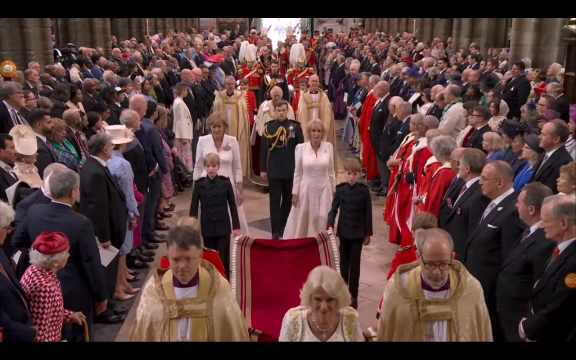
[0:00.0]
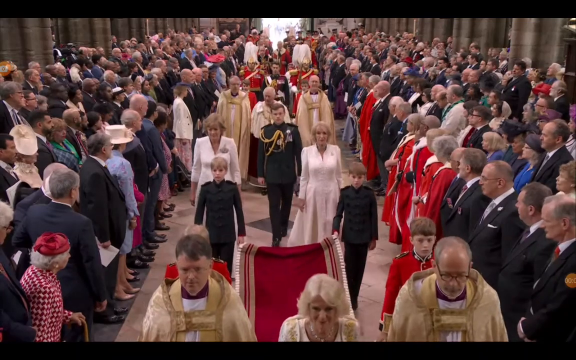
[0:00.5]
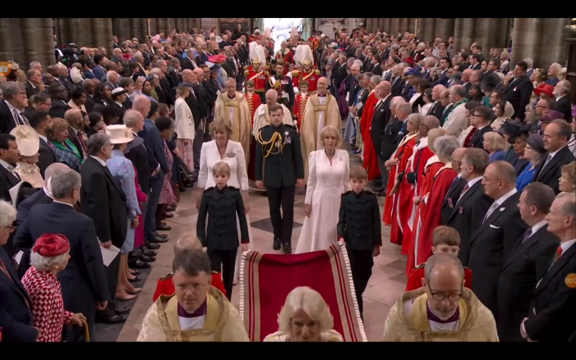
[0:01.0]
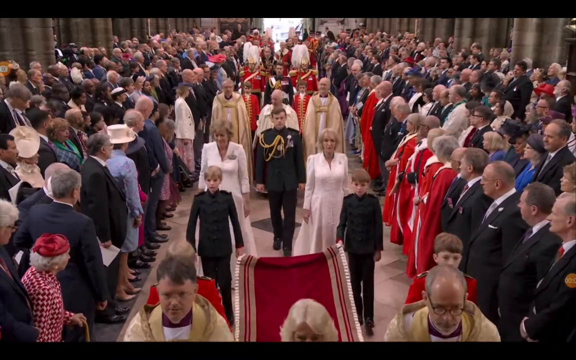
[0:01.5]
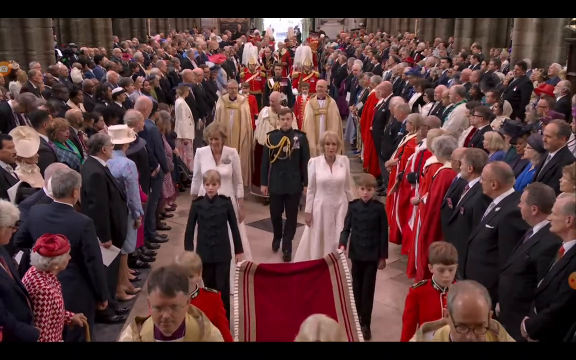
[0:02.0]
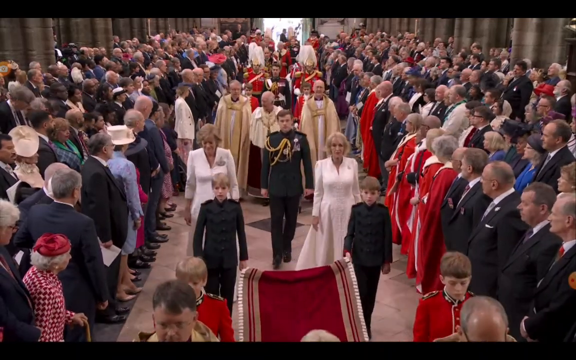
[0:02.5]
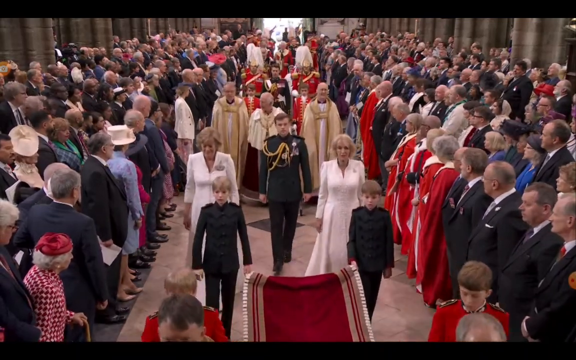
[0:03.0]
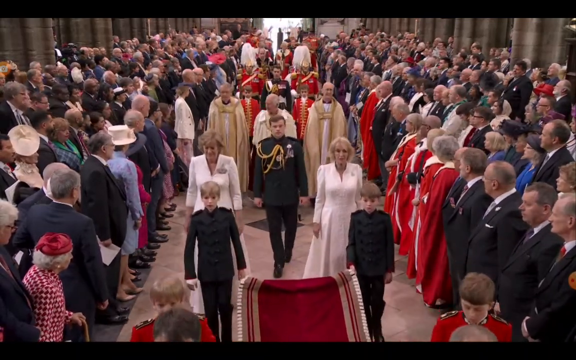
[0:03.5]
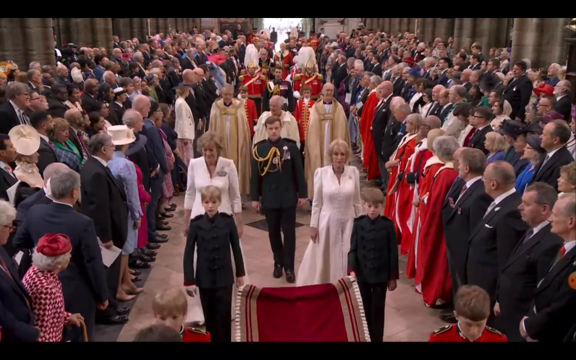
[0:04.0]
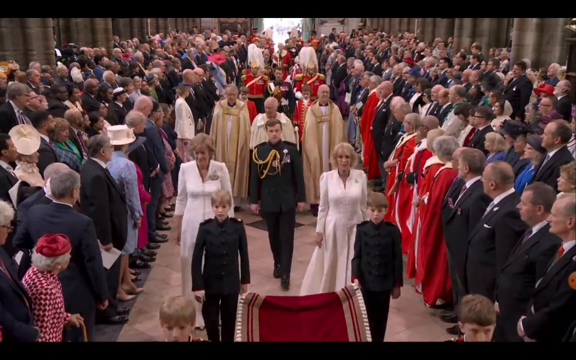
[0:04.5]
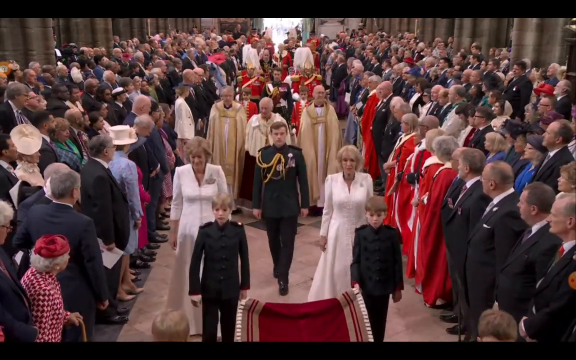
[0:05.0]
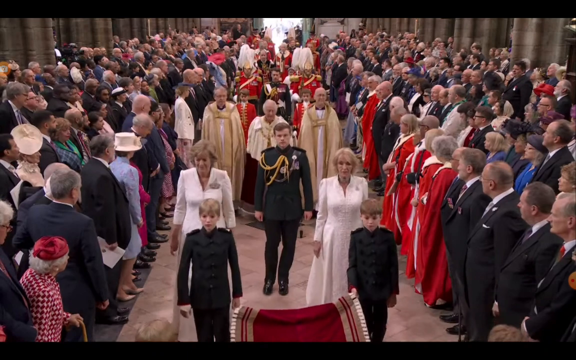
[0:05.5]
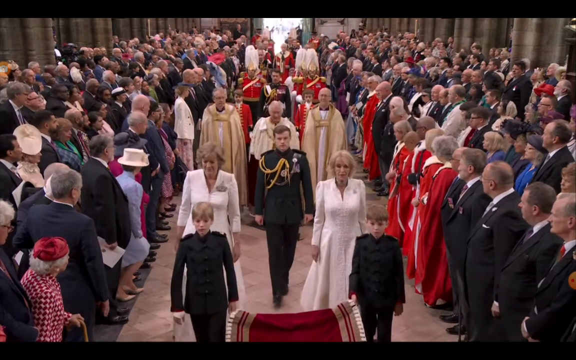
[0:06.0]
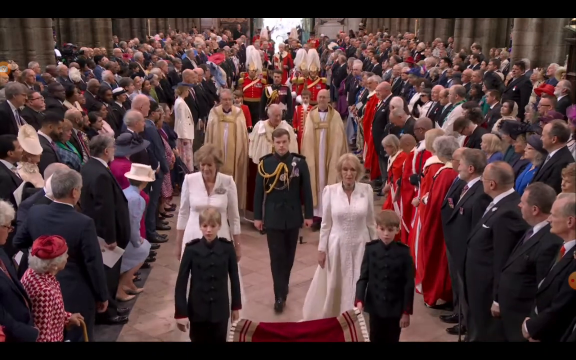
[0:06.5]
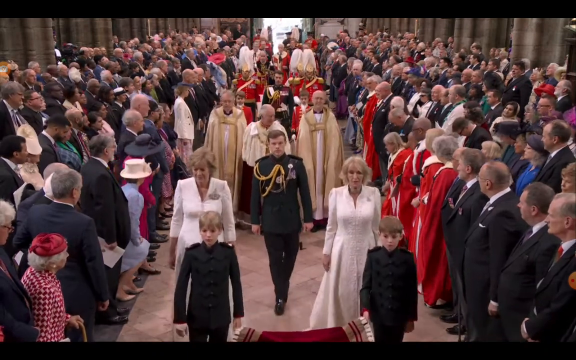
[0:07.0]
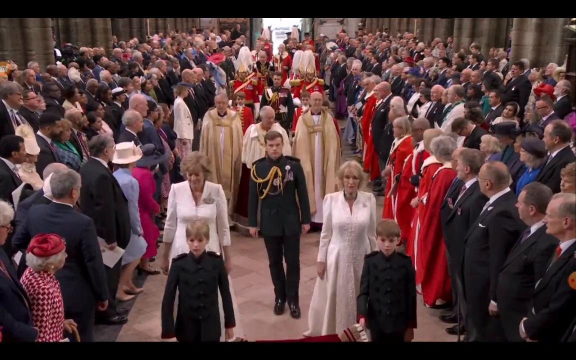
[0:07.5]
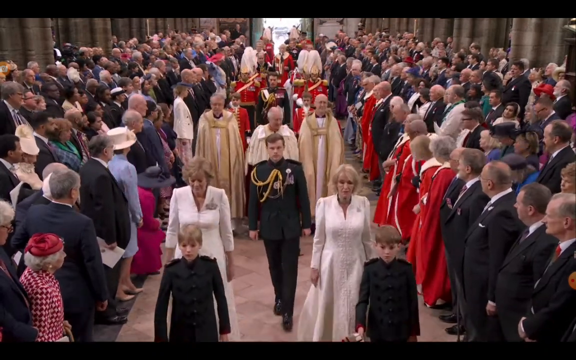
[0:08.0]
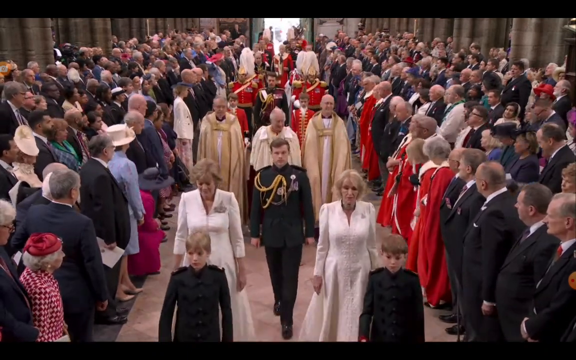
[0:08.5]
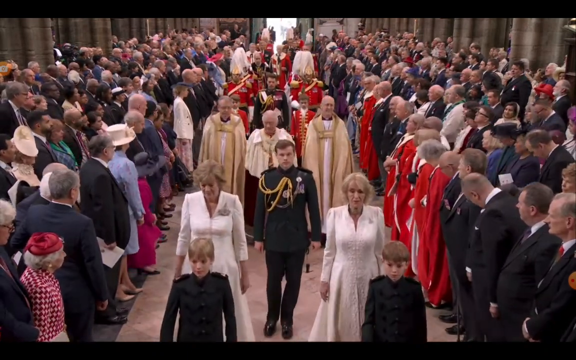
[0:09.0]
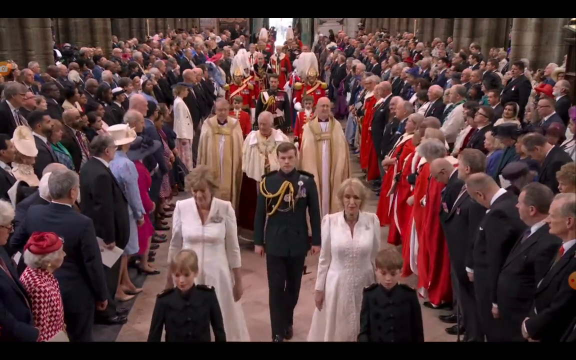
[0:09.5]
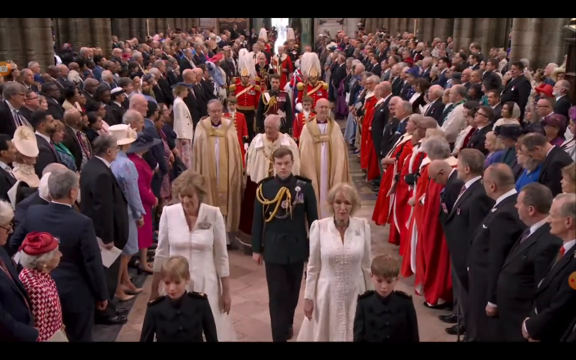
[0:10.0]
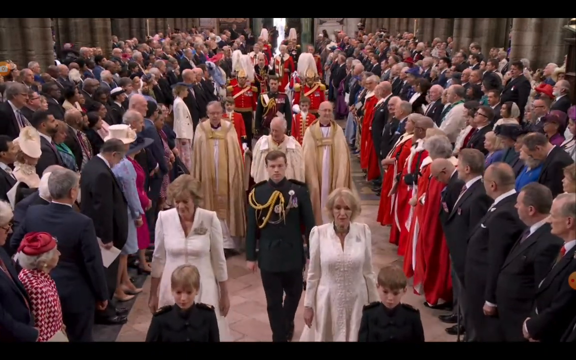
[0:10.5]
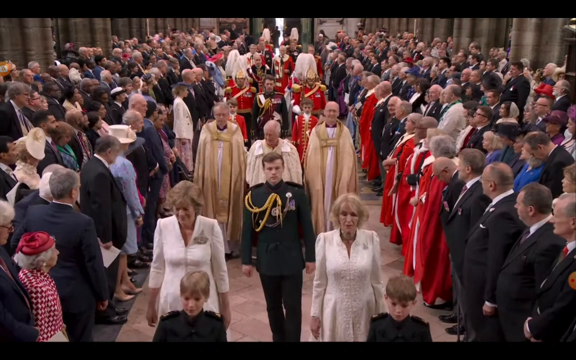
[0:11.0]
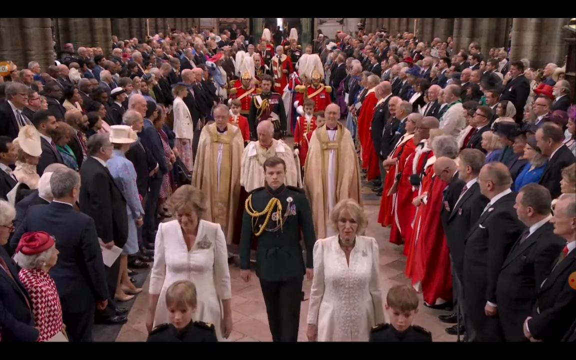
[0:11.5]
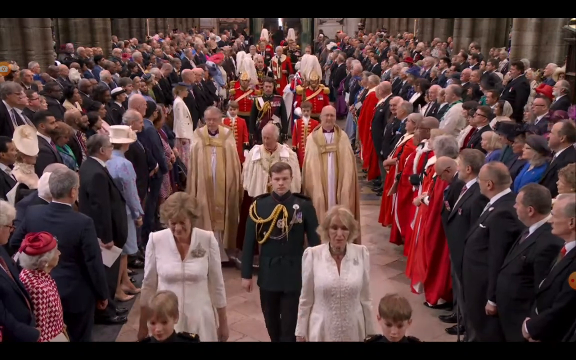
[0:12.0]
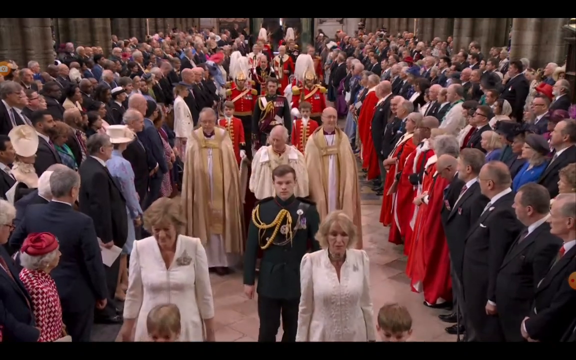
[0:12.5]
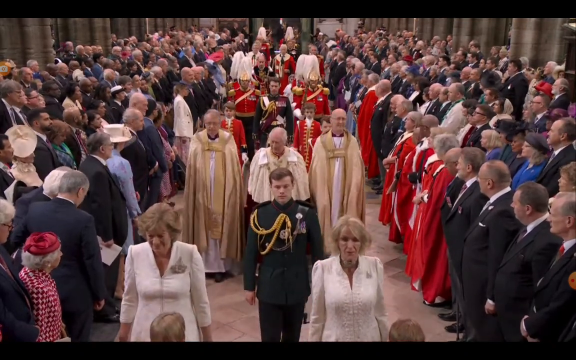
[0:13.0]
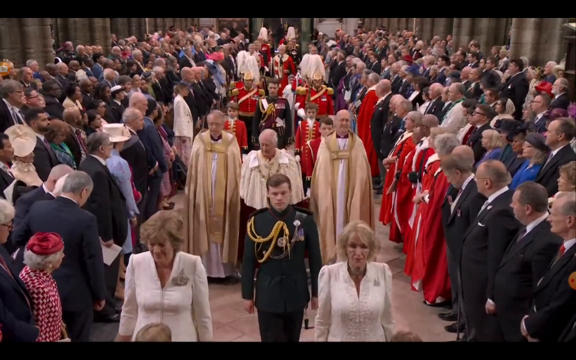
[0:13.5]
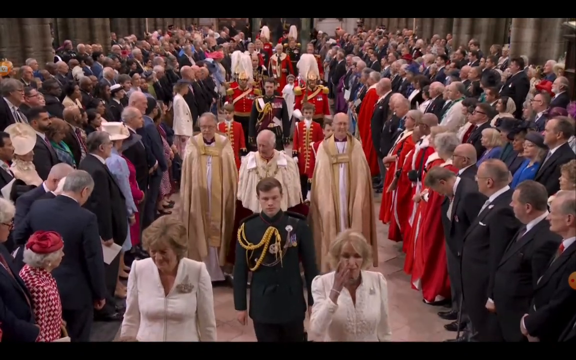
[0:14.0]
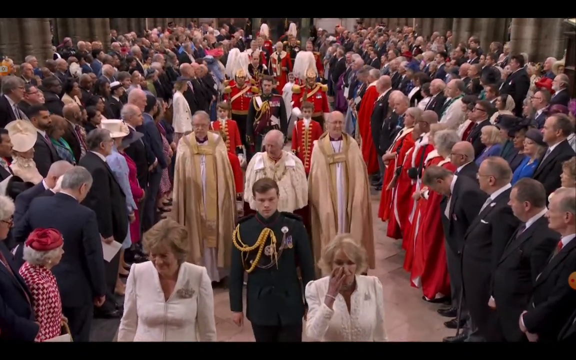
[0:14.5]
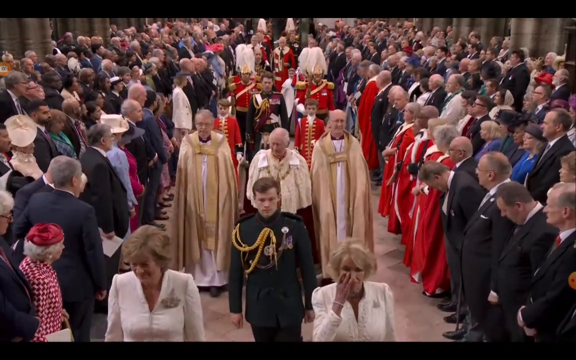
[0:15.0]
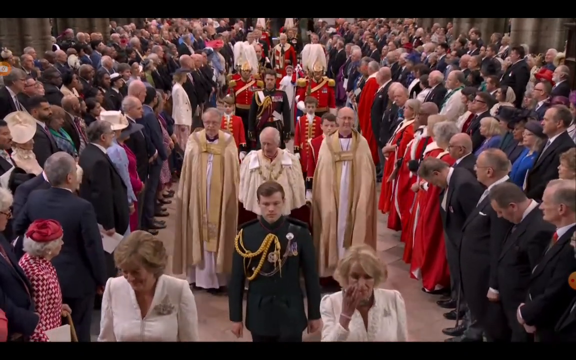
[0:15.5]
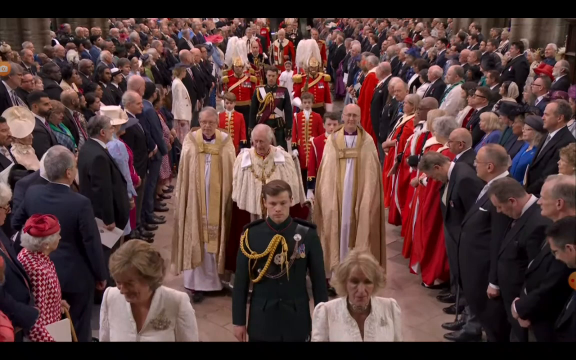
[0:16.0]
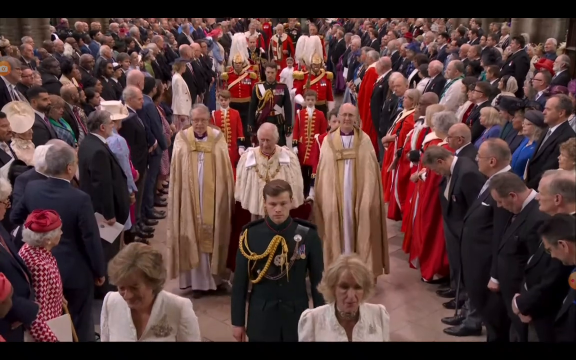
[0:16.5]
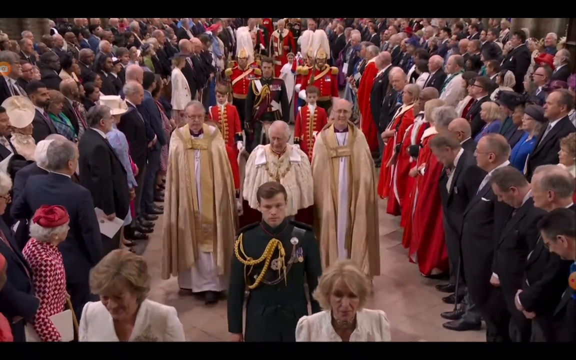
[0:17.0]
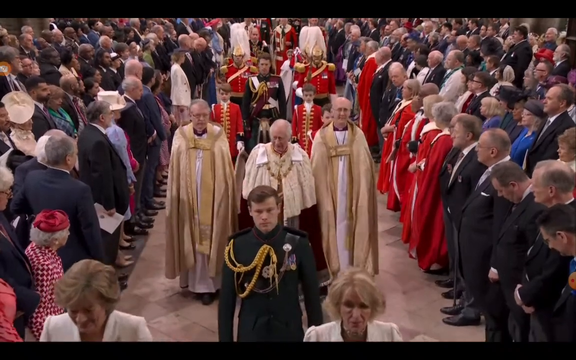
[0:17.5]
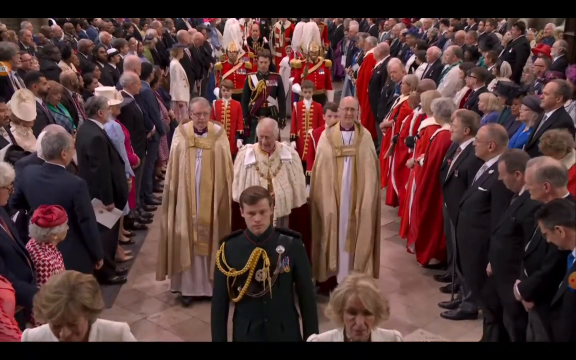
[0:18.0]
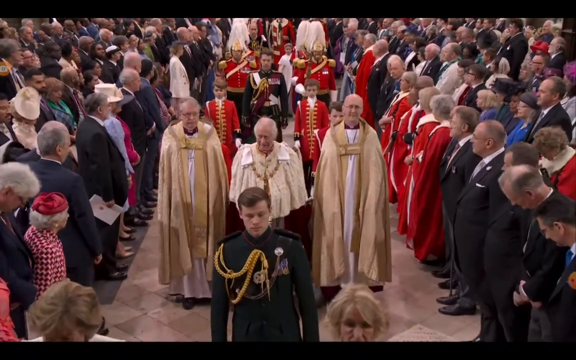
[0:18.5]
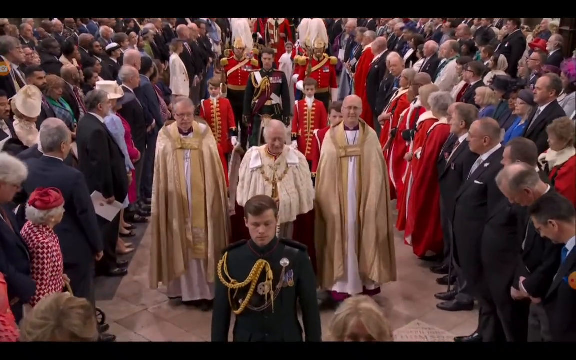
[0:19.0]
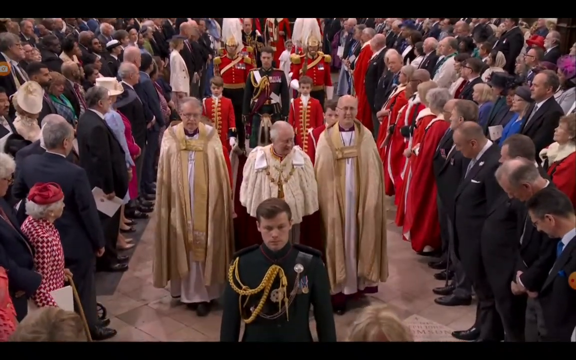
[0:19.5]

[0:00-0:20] A formal royal ceremony is underway, with a huge crowd standing on each side of an aisle. Prince Charles appears, and the event is probably his coronation as king. The scene is very colorful. A priest precedes the prince, some people walk in front of him, and probably archbishops walk on each side of him. A long procession moves down the aisle of the cathedral. On each side, the people are all well-dressed: most of the women are wearing hats and the men are all in suits. The clergy seem to all be in red robes, except the higher clergy, who wear ivory robes with gold accents. The procession is very slow and moves from the outdoors into the cathedral. The mood is somber, and the people are all enwrapped, looking at the prince, who is apparently about to be made king.